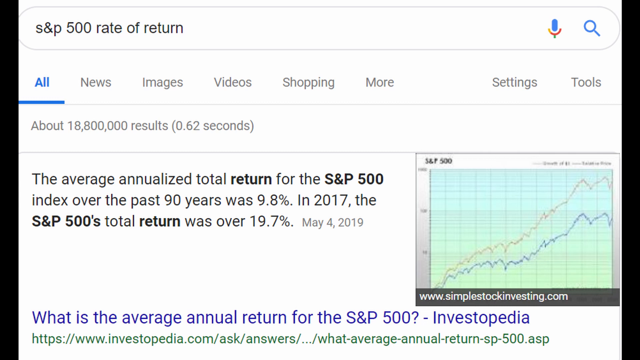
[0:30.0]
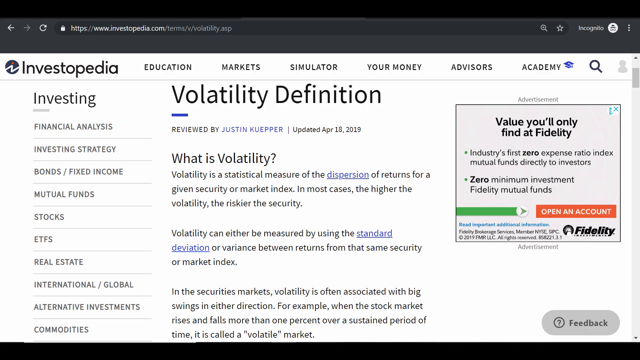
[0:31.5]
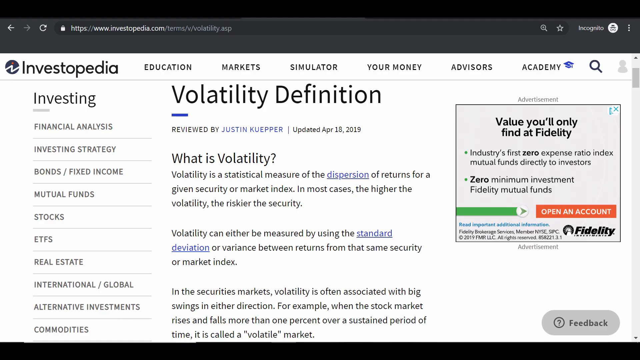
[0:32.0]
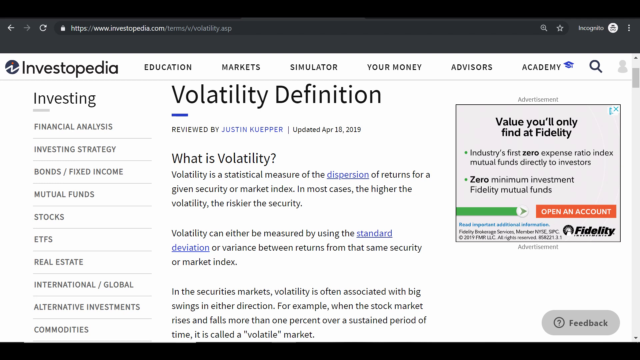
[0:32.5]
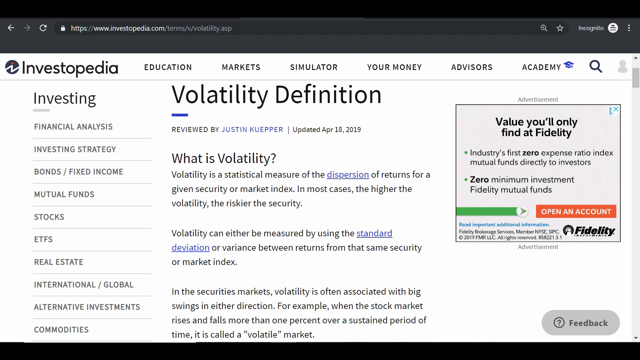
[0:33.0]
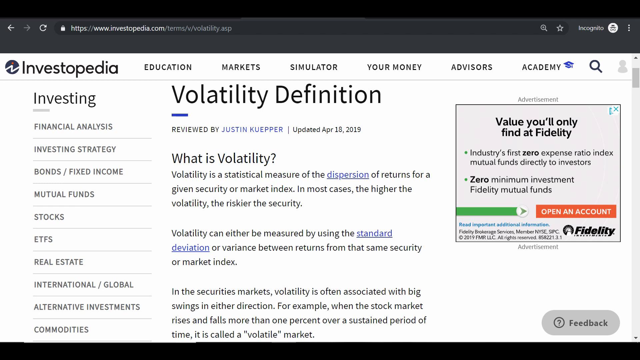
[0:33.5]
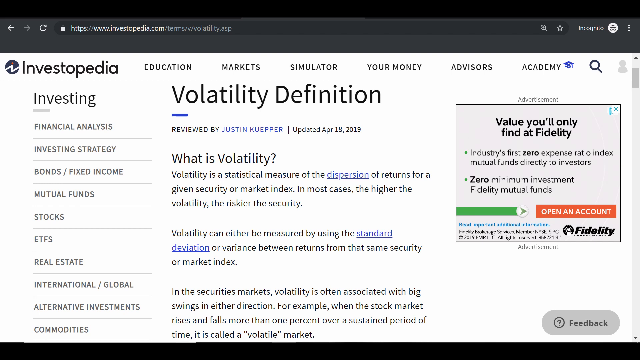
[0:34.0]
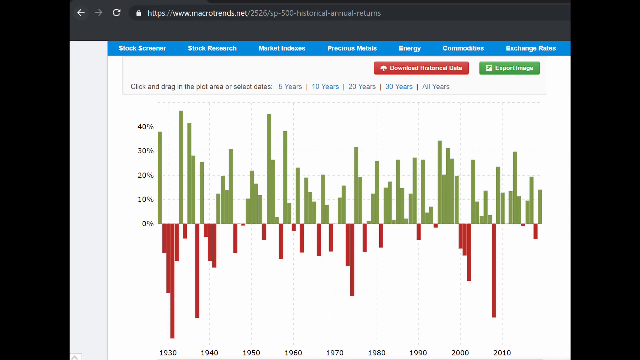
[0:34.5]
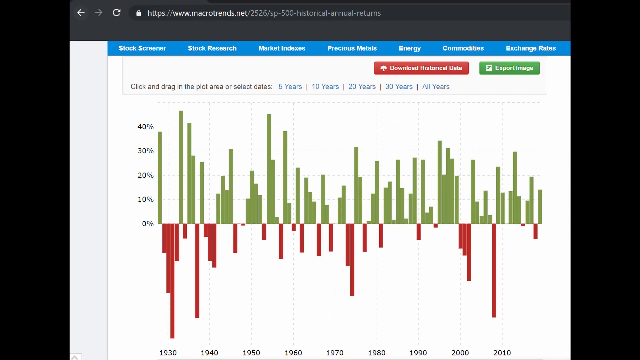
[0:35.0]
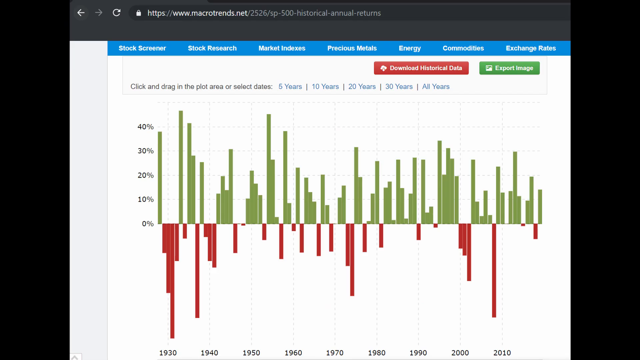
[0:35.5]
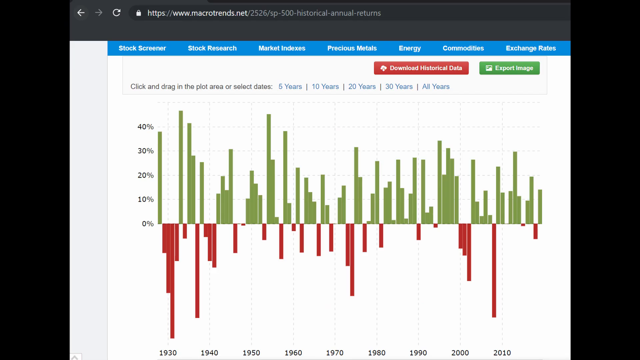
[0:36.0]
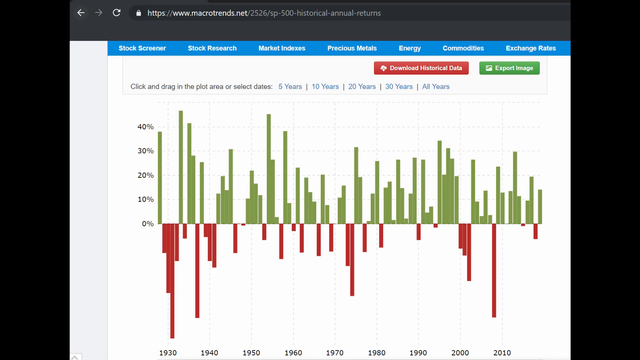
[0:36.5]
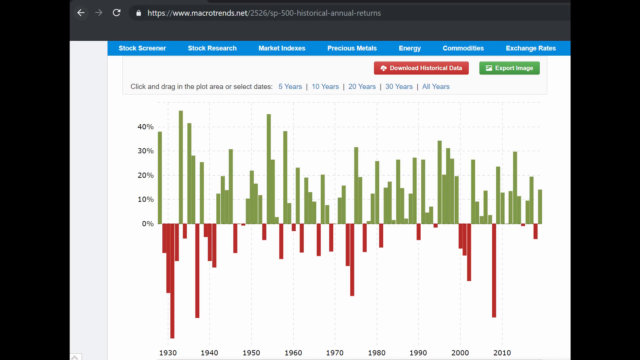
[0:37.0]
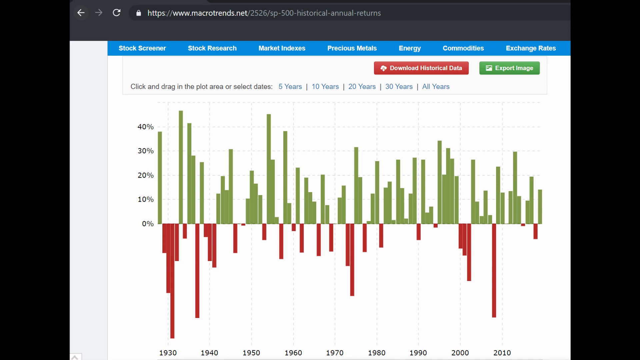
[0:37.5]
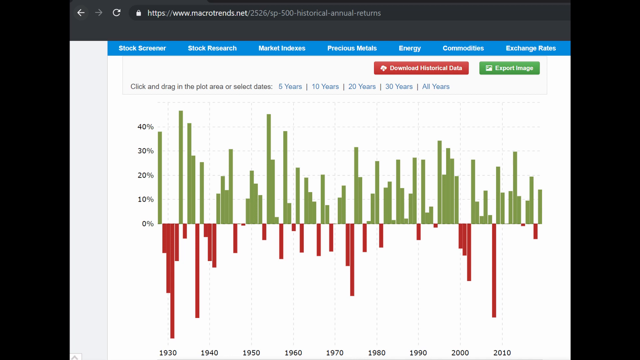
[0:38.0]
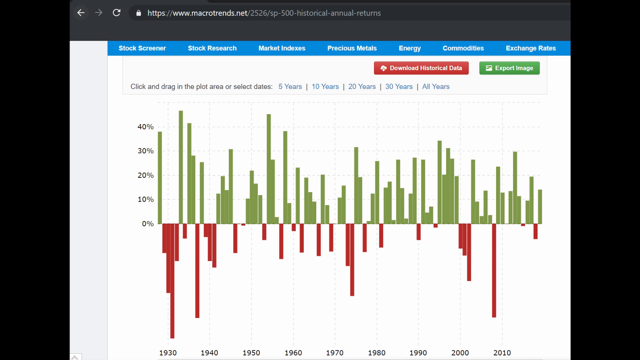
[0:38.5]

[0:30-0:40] Information about the S&P 500 continues on screen. A screenshot of an Investopedia page about the meaning of volatility follows, and its text reads: "What is volatility? Volatility is a statistical measure of the dispersion of returns for a given security or market index. In most cases, the higher the volatility, the riskier the security. Volatility can either be measured by using the standard deviation or variance between returns from the same security or market index." A graph with green and red bars appears next. The green bars extend upward from the X-axis, and the red bars extend from the negative values of the Y-axis. The scale ranges from 0 to 40%, across different years, and the years can be divided into 5, 10, 20, 30 and All Years. The graph shows a percentage of something for each year, though it is unclear what. A link on the page reads "S&P 500 Historical Annual Returns," so the graph possibly shows that percentage over time.